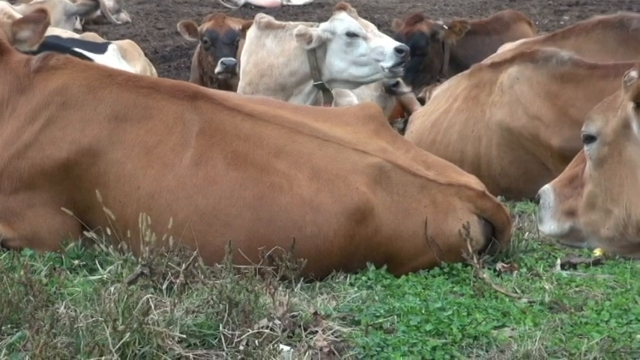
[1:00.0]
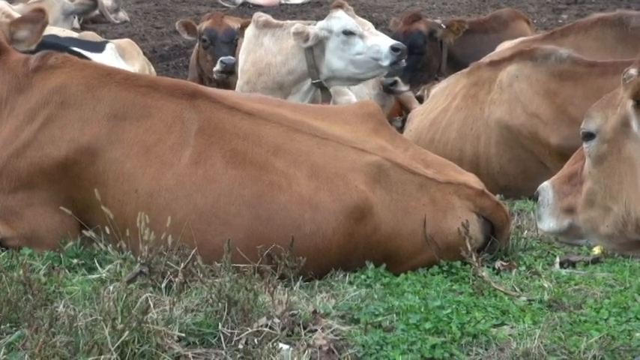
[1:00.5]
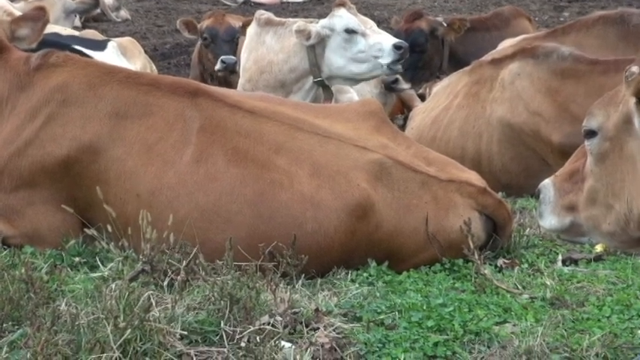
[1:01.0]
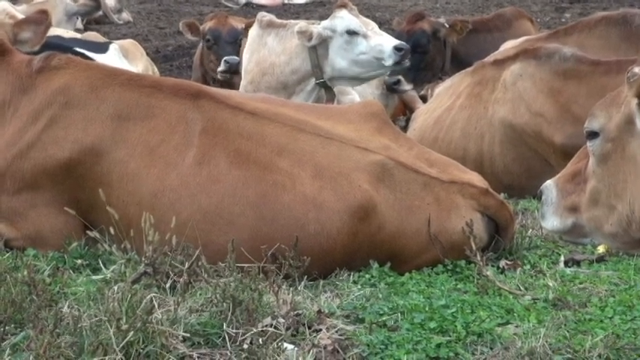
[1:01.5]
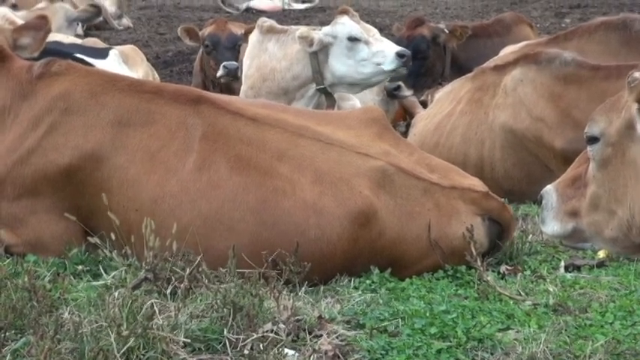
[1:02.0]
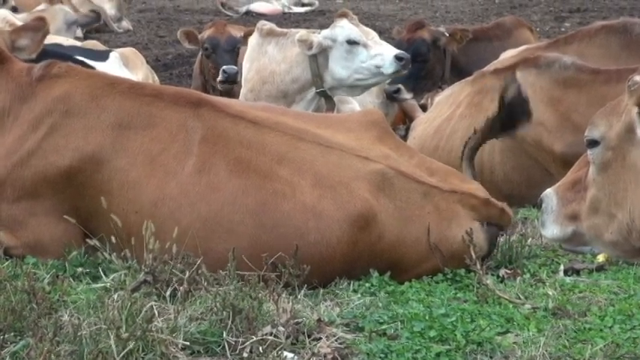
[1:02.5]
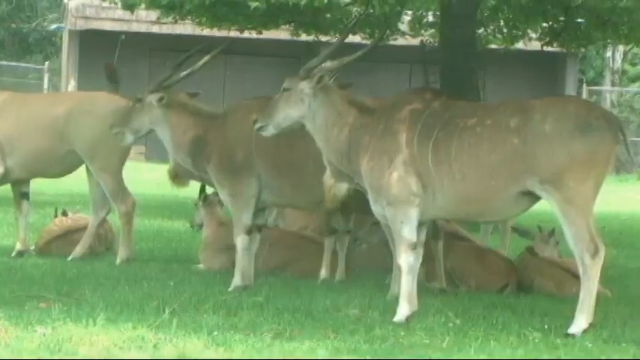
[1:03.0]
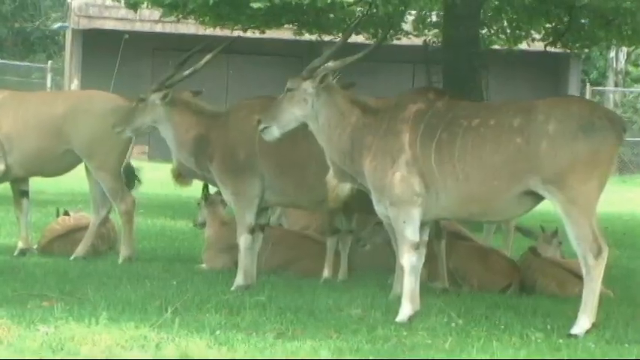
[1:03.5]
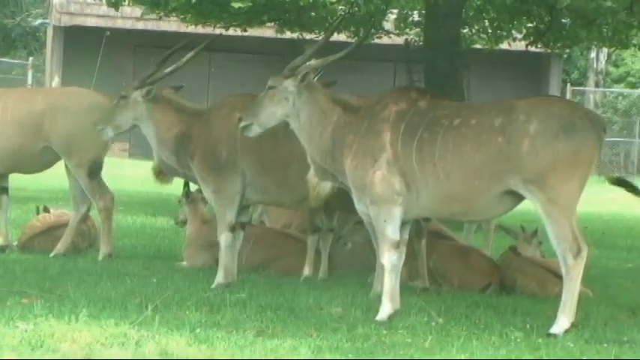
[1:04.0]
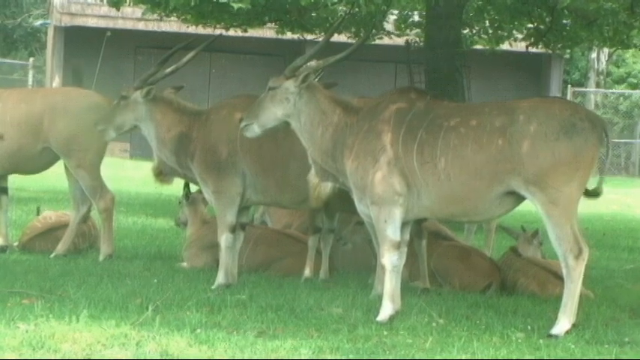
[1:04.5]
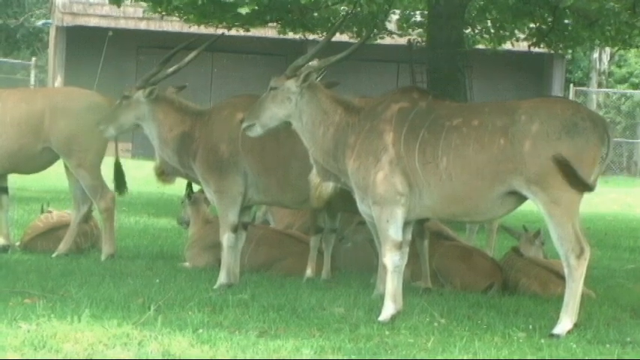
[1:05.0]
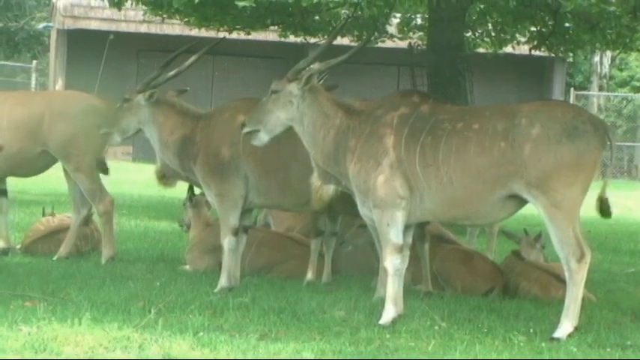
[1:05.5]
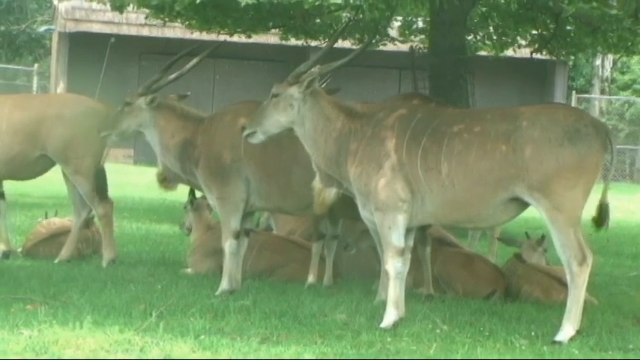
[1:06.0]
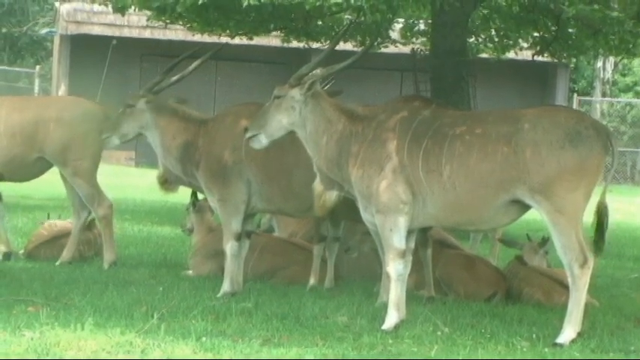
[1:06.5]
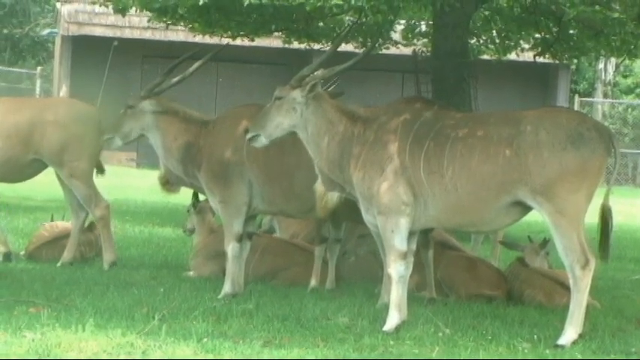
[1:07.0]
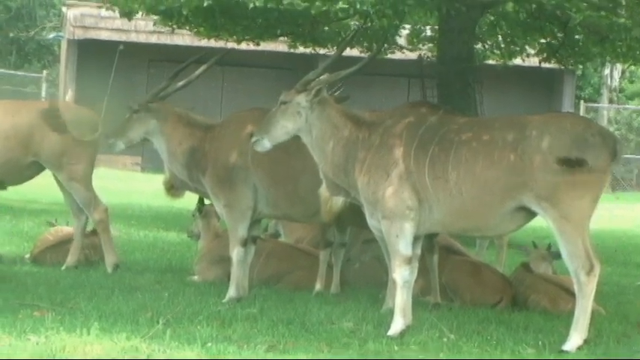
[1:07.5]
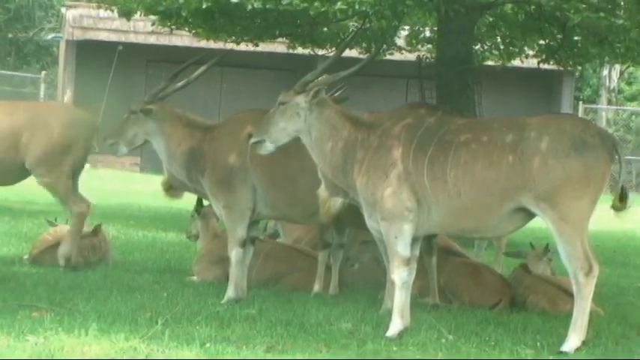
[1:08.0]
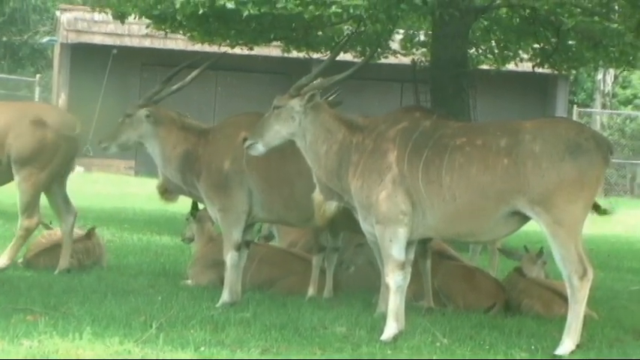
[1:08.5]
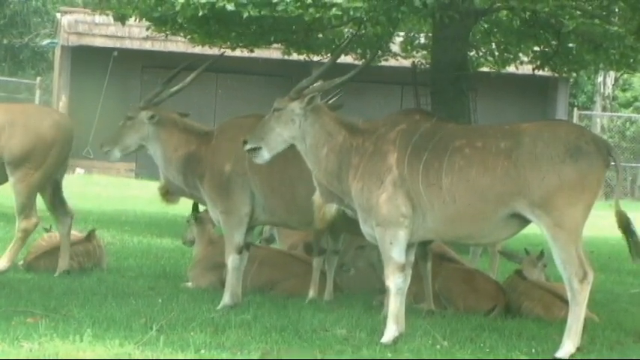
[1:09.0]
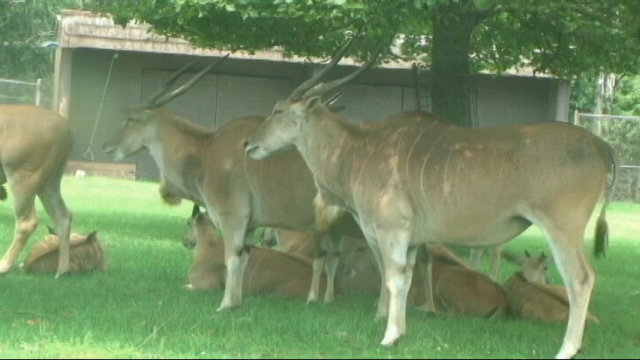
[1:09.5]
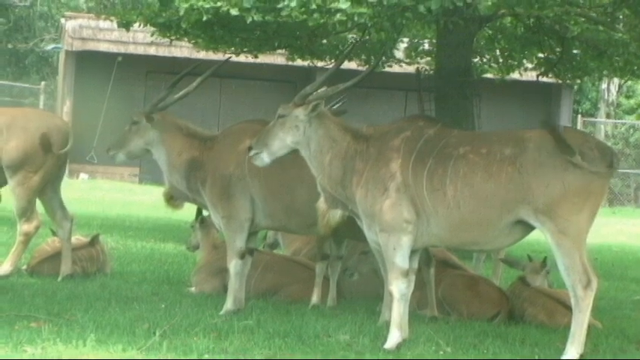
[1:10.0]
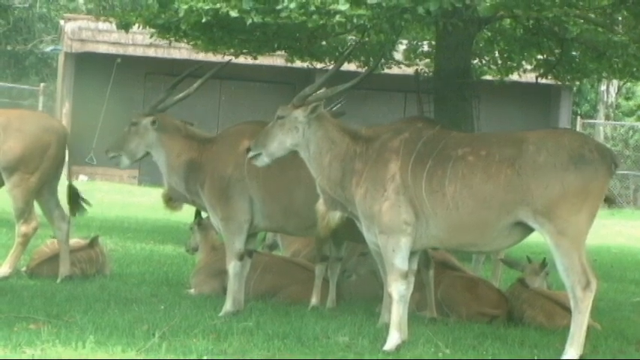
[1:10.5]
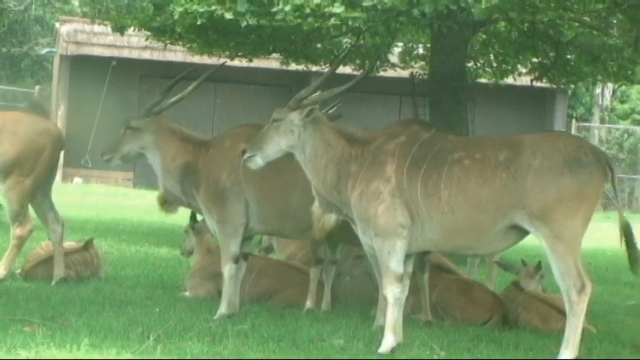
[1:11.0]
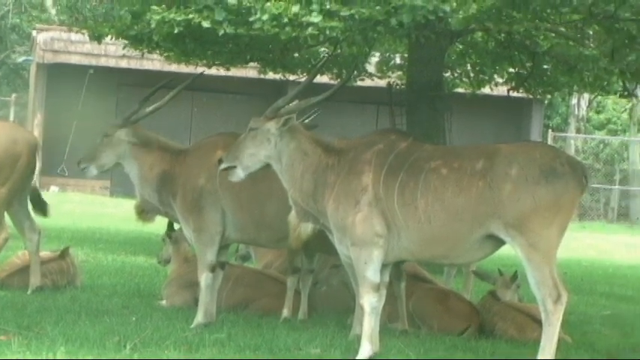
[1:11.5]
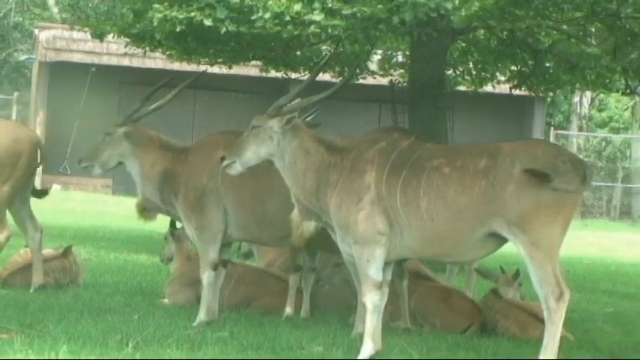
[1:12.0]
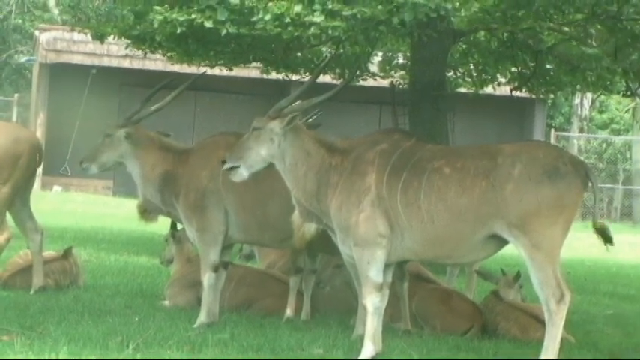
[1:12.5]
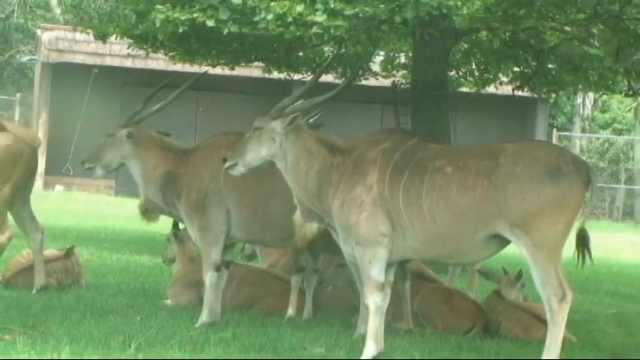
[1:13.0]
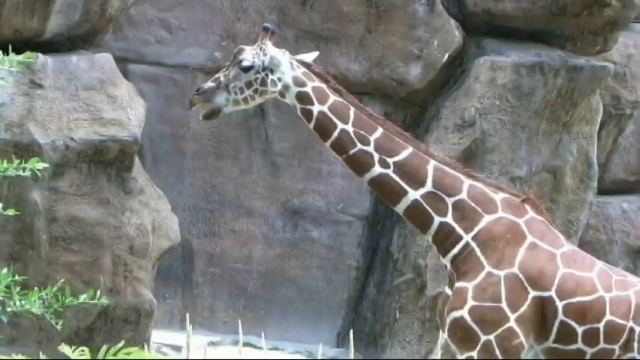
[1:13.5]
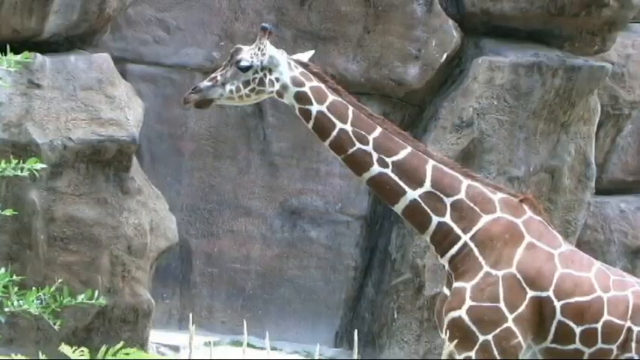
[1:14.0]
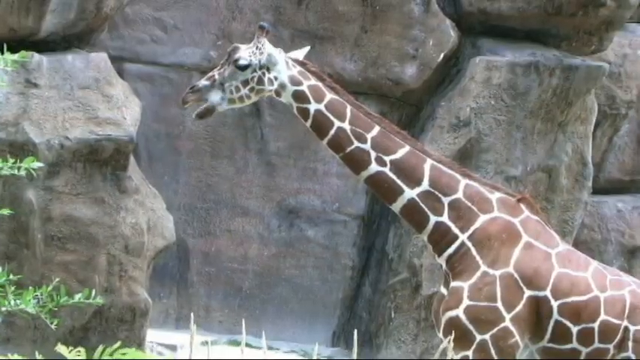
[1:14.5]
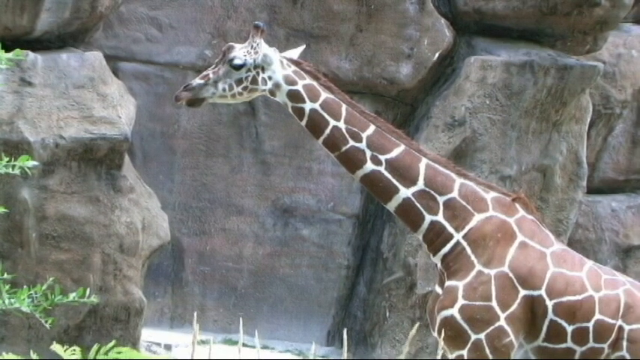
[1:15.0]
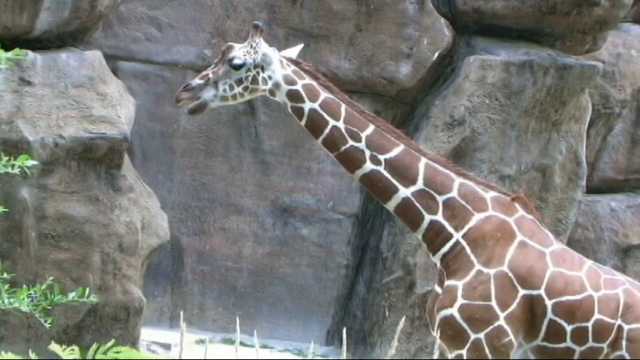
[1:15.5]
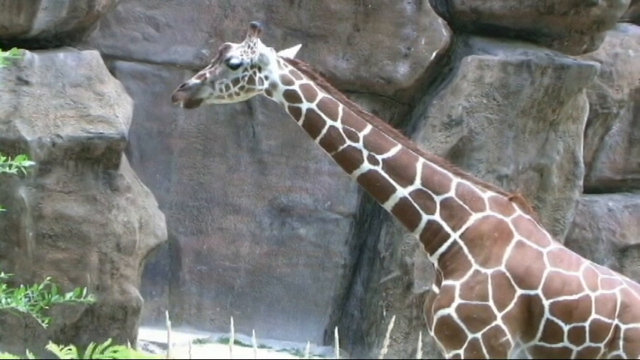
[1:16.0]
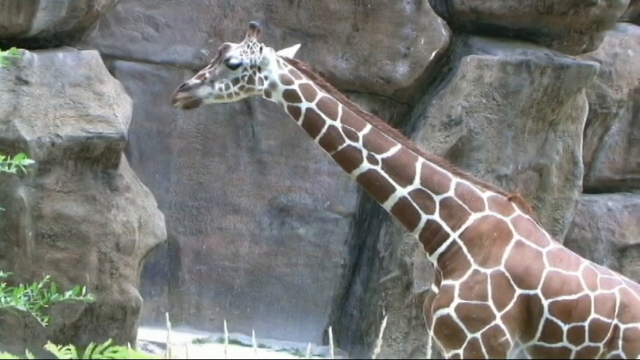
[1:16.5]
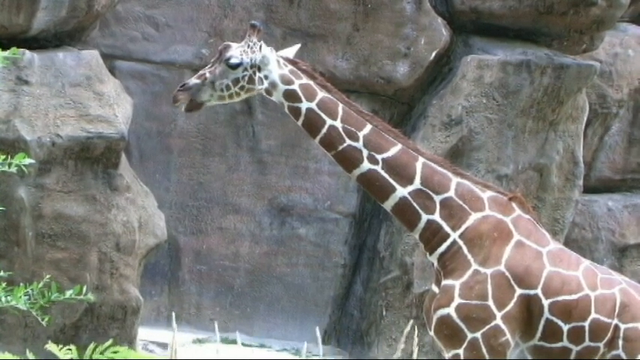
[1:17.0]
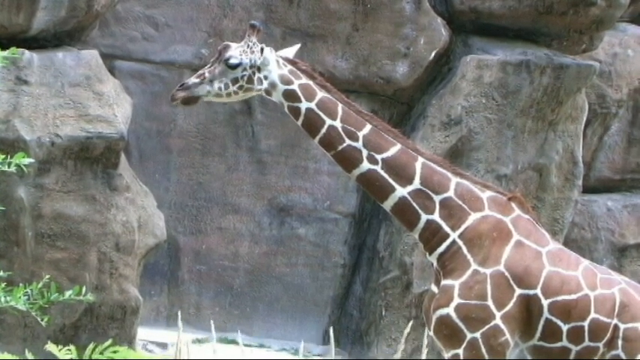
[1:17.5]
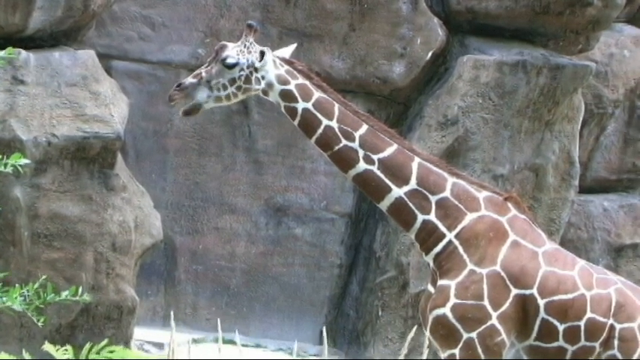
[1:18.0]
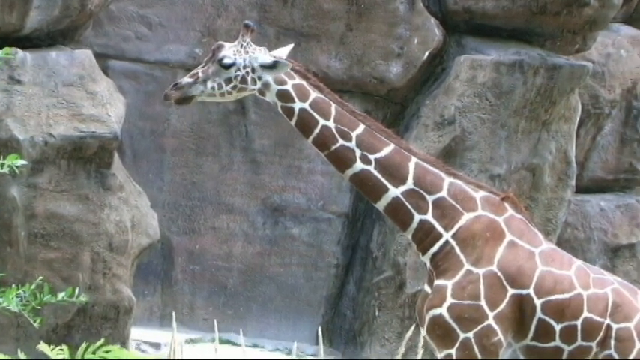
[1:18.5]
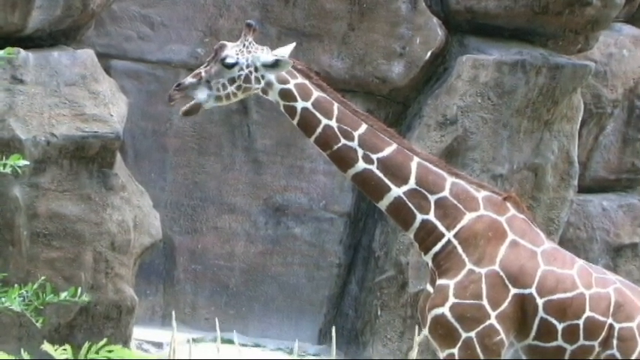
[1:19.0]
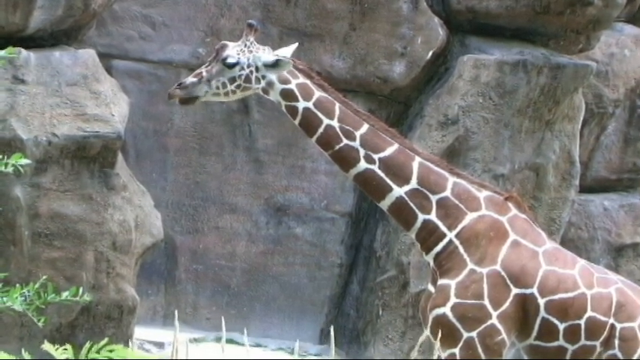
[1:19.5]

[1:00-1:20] The cows lie in the field, with a cow's torso taking up most of the camera view for most of the shot. In the back, some cows are grazing, including a white cow grazing while facing the right side of the camera. Next comes what looks like a side view of a group of large gazelle, facing towards the left side. Some behind them are lying on the ground, while the ones in the foreground are standing. They appear to be chewing something and staring off to the left side. Their tails wag on the right side, and some of their ears move around as the camera stays on them for a while. The video then cuts to side-view footage of a giraffe, likely in a zoo, with rocks behind it. The giraffe appears to be chewing on something.